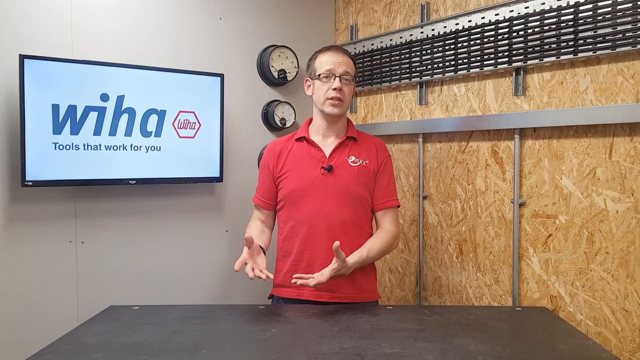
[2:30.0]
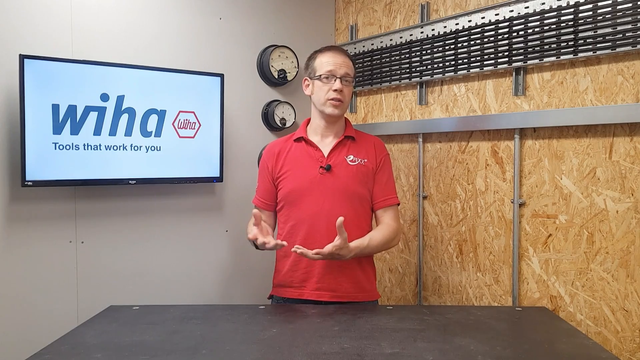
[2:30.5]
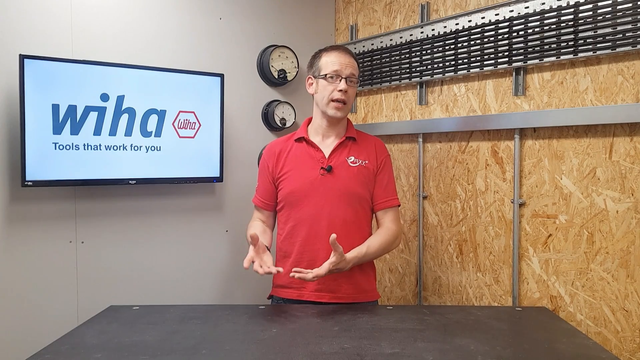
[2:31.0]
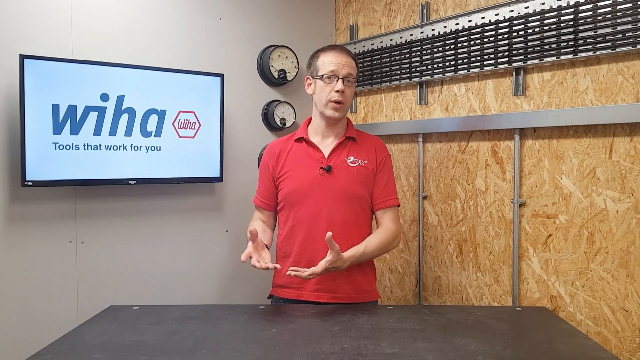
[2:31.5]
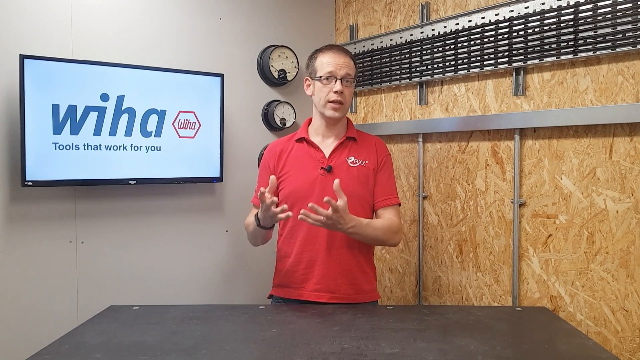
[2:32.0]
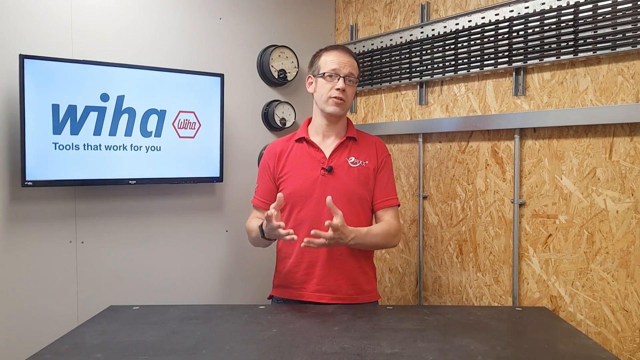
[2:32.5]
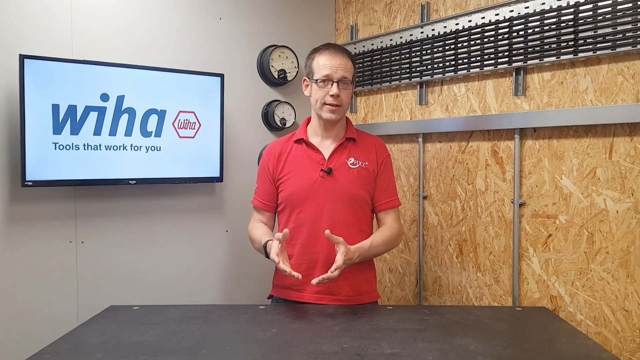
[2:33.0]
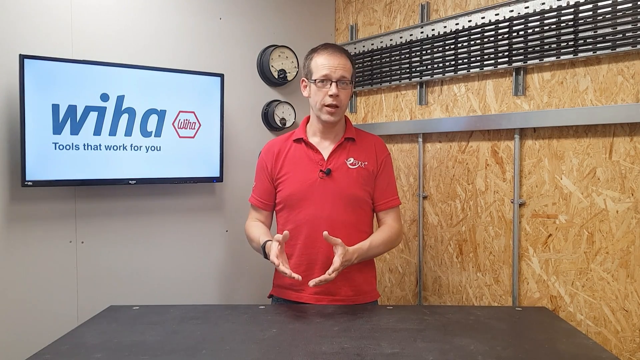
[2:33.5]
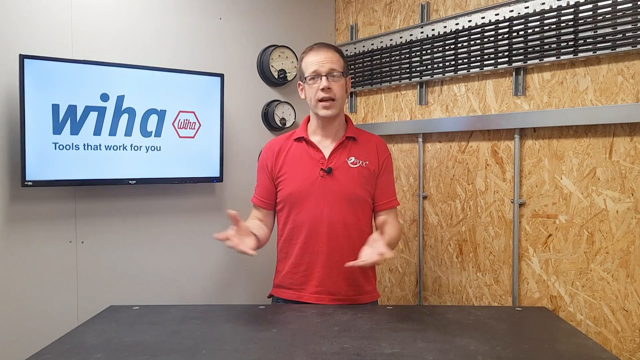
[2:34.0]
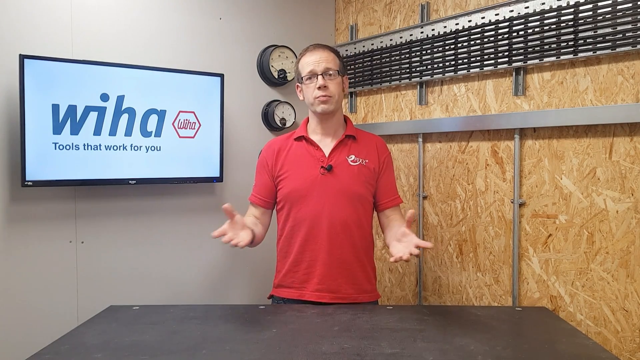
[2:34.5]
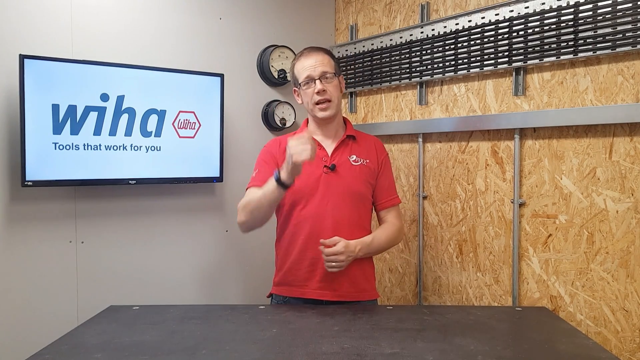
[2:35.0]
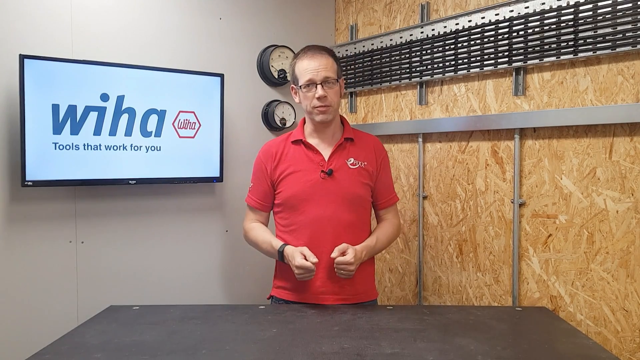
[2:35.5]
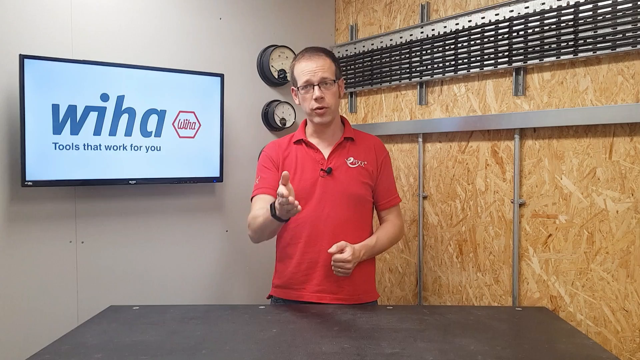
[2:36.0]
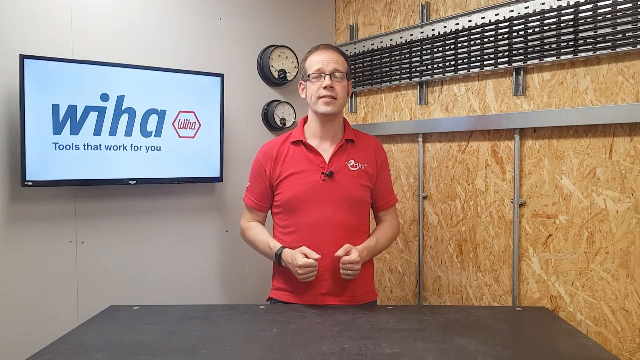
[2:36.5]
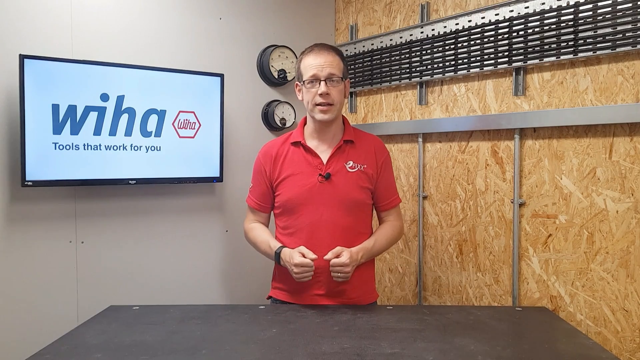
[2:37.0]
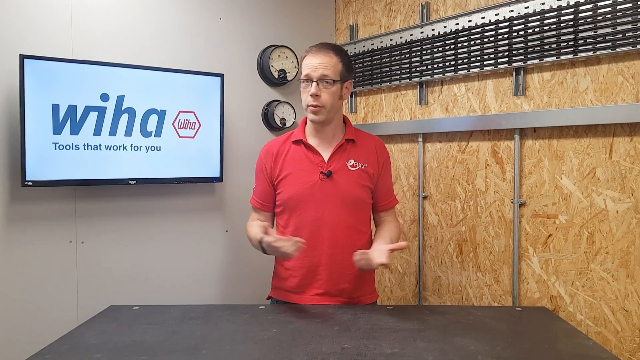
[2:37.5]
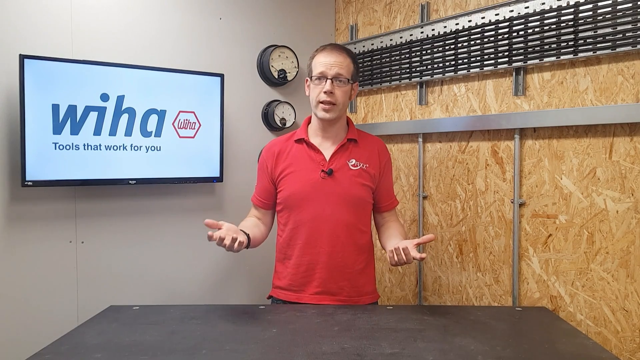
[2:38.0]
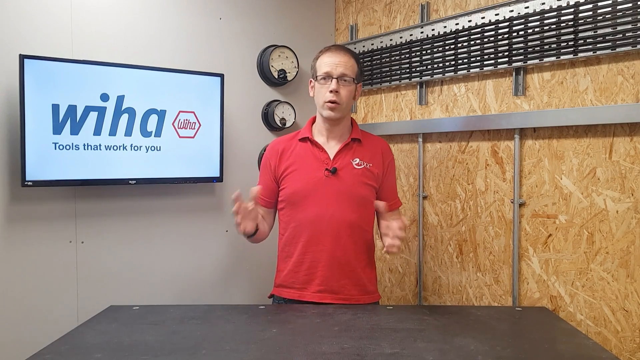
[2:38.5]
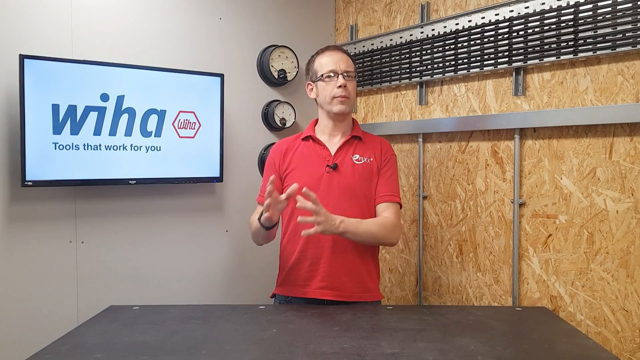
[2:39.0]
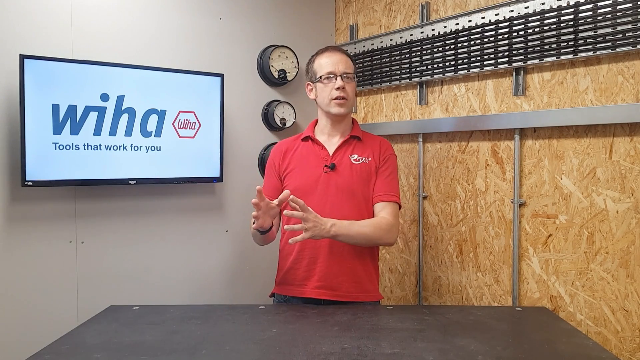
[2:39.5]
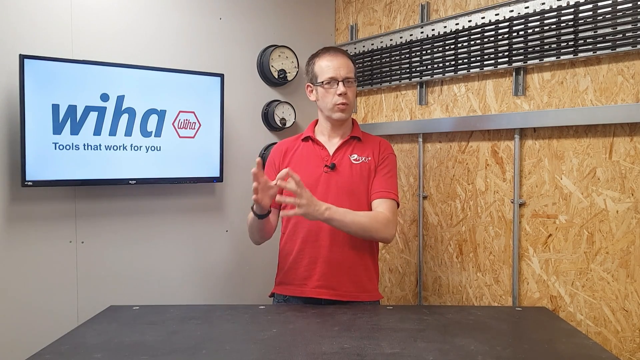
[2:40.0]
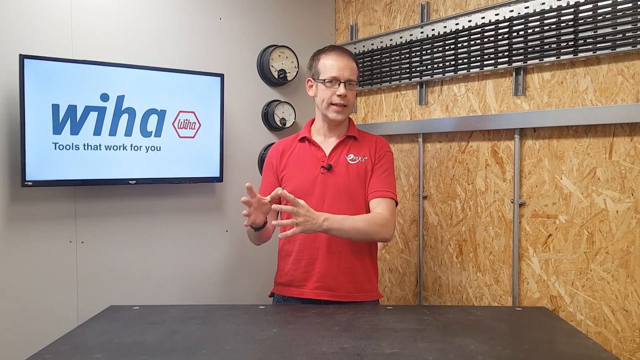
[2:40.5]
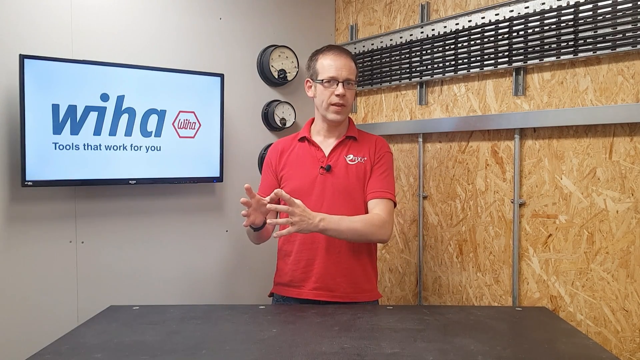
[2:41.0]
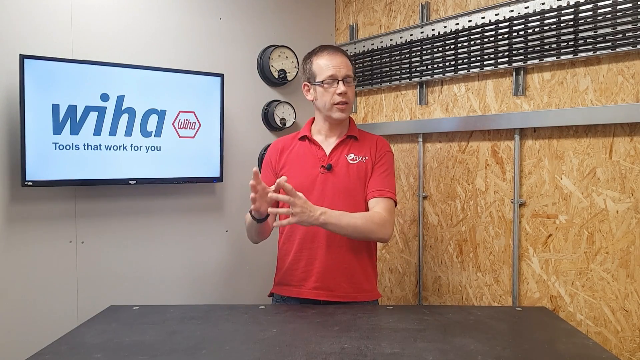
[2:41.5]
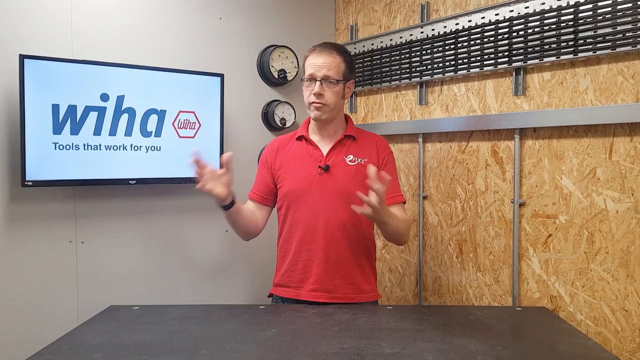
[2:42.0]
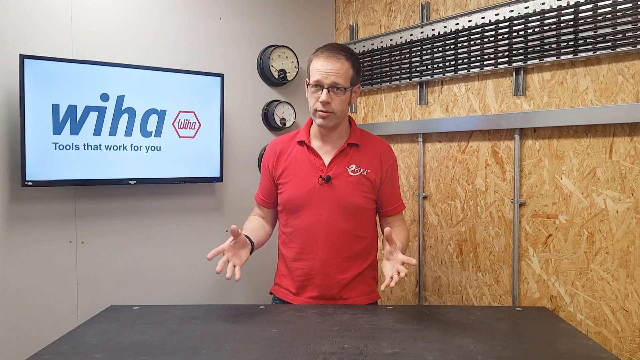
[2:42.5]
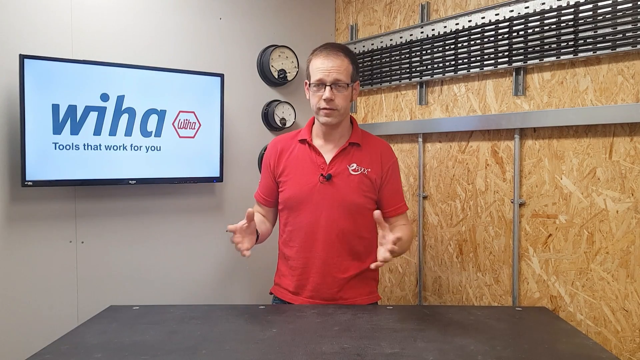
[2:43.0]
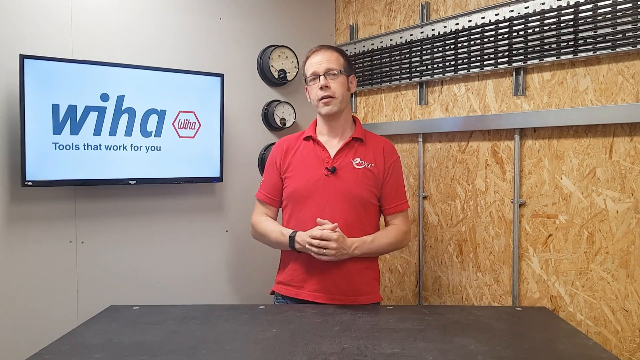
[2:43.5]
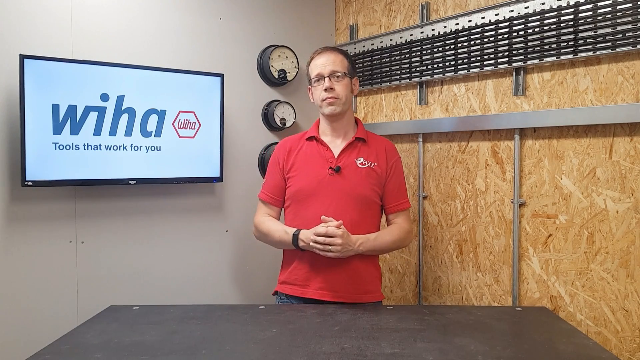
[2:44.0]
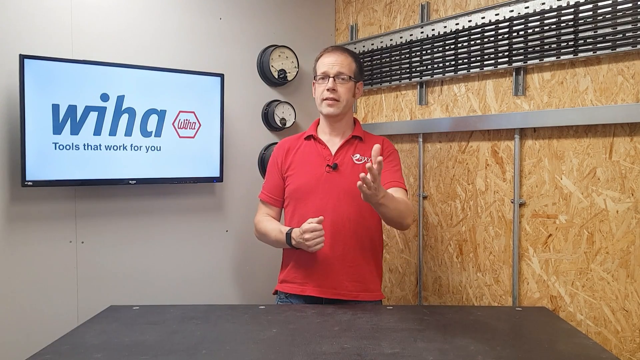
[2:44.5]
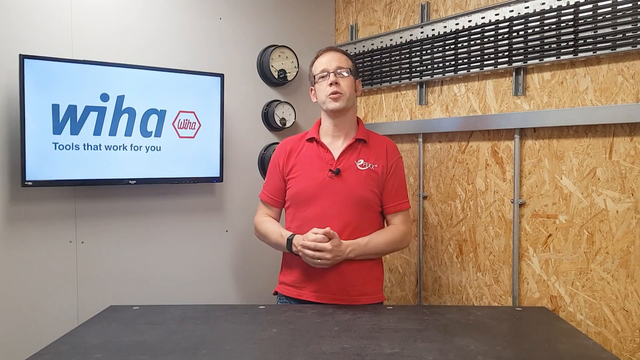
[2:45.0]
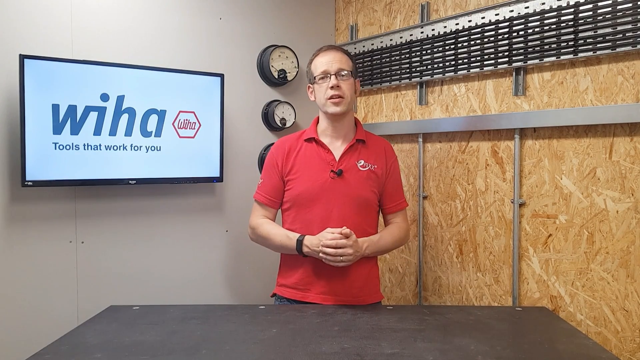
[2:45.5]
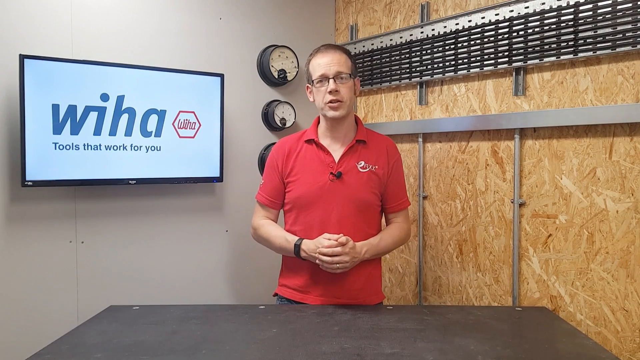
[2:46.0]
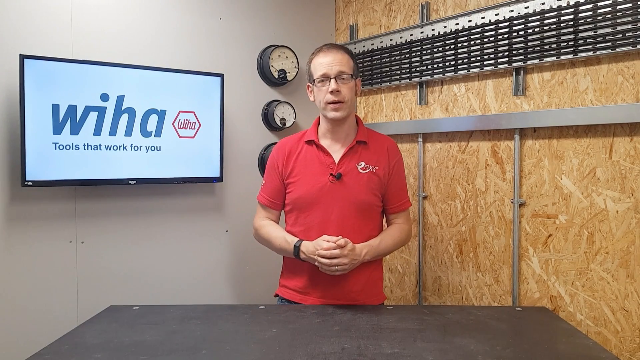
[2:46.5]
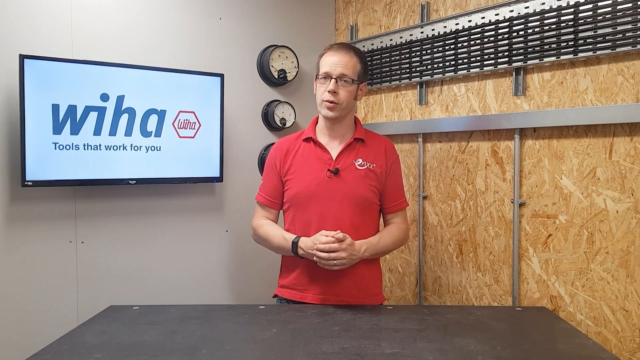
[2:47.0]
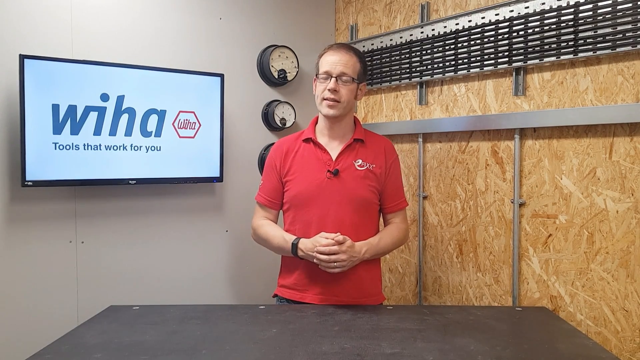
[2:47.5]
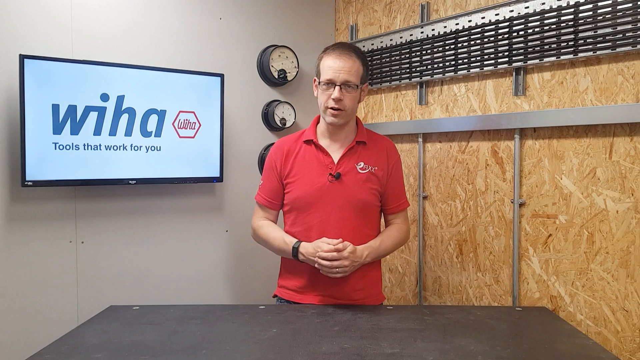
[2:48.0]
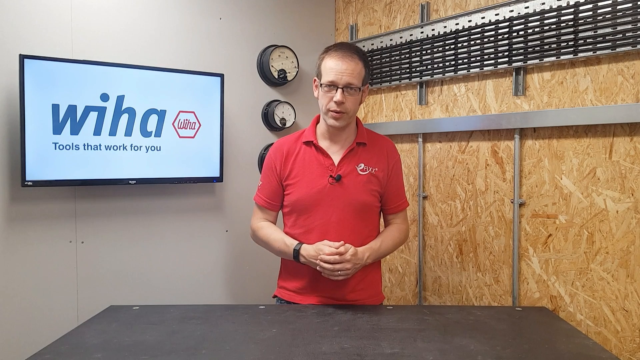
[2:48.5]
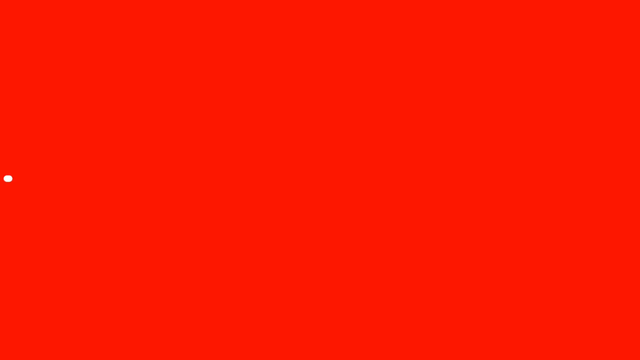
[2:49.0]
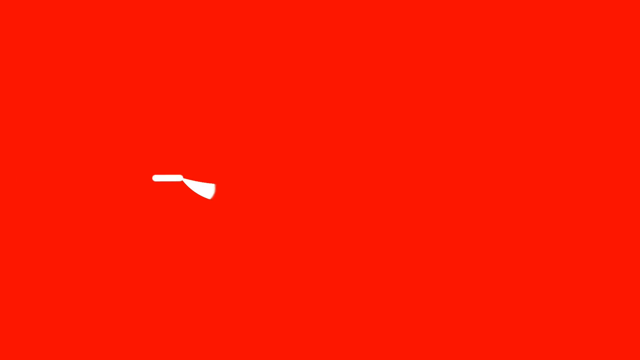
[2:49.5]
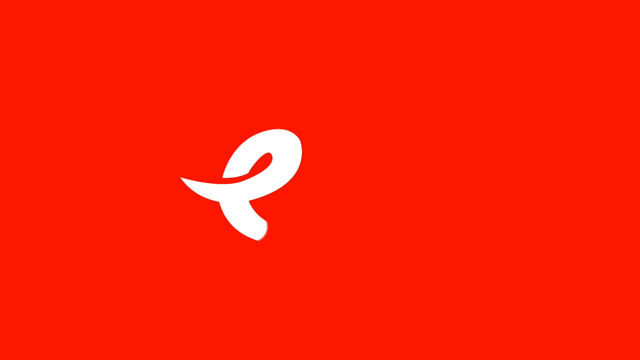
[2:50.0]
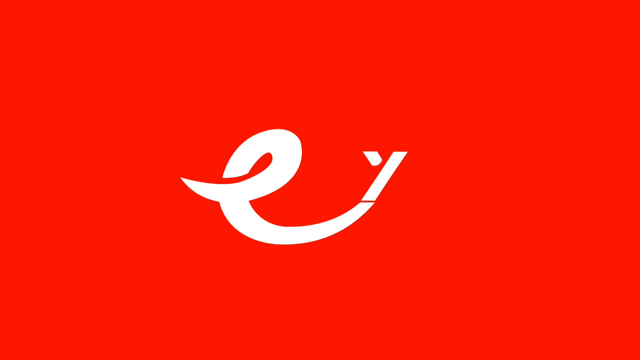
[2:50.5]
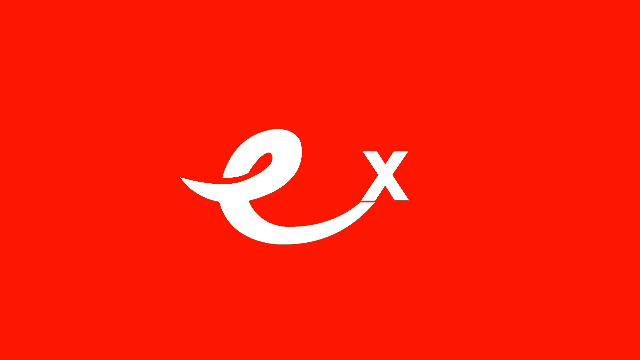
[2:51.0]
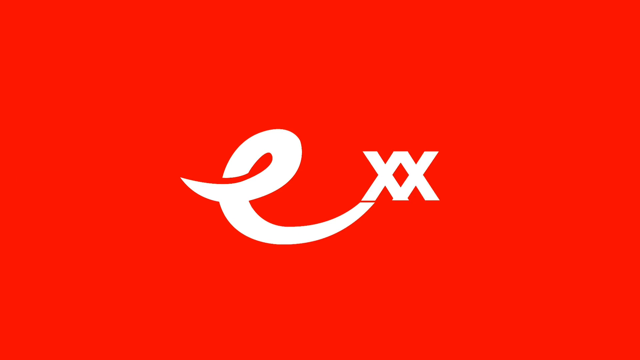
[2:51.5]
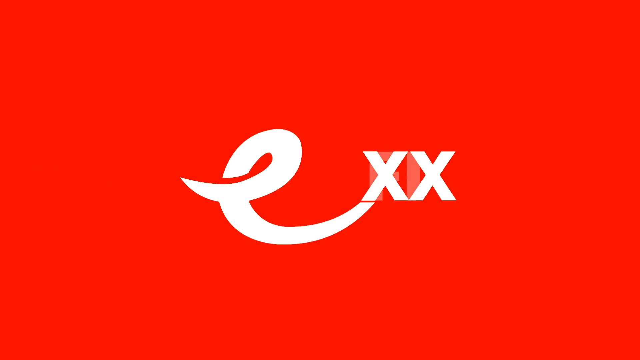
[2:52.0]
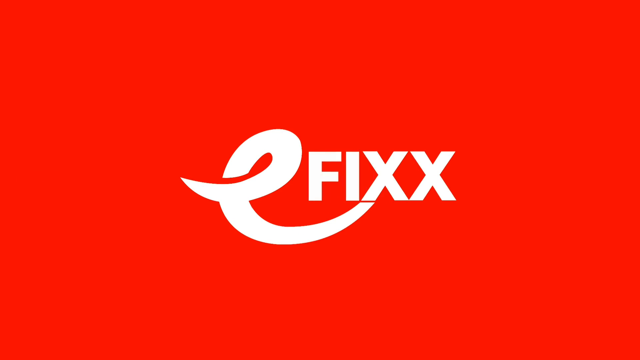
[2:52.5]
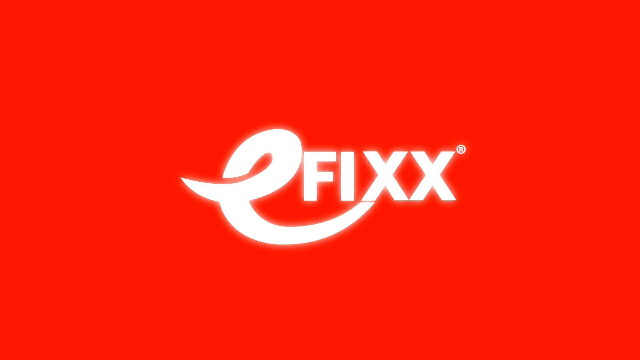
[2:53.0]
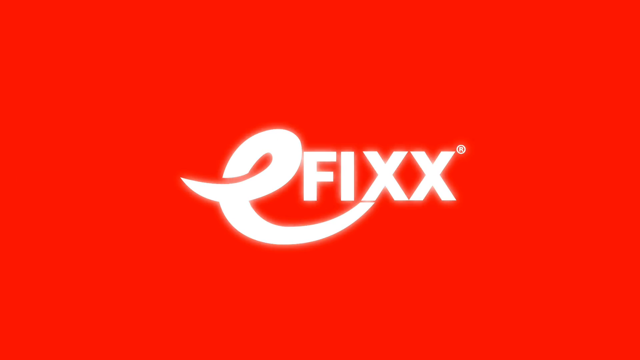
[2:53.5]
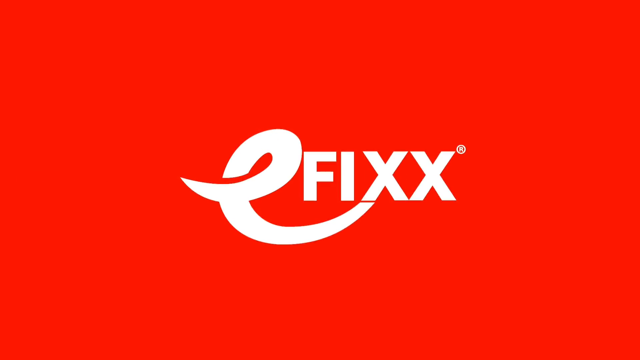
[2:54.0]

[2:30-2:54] The WIHA representative, in the center of the screen, waves his hand and appears to be wrapping up. He is in the garage, wearing a red T-shirt and glasses, with what looks like a microphone on his chest and a watch on his right wrist. The company logo "WIHA" in black text is on the big TV screen on the left, with more text below reading "tools that work for you." To the right of the TV, on a white wall, are three wall clocks that look like different meters. On the right-hand side is a wall mount.